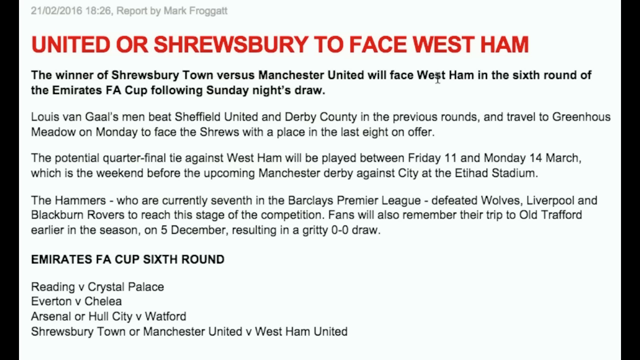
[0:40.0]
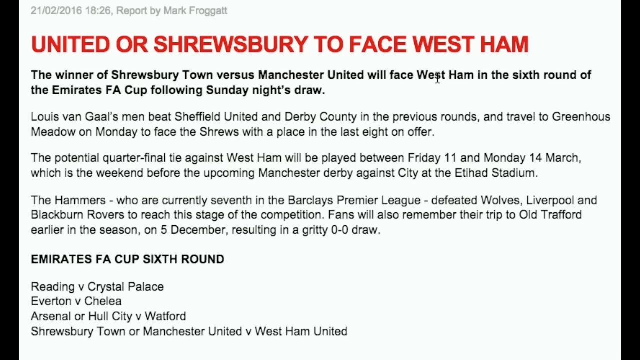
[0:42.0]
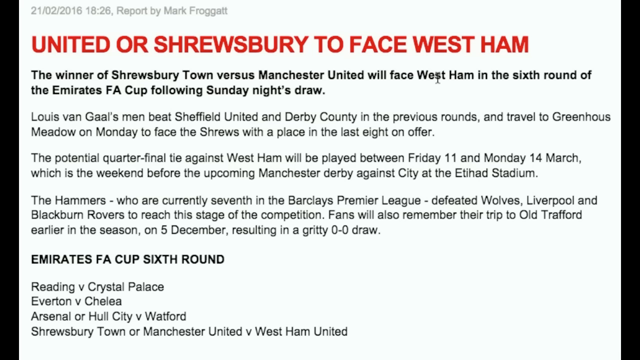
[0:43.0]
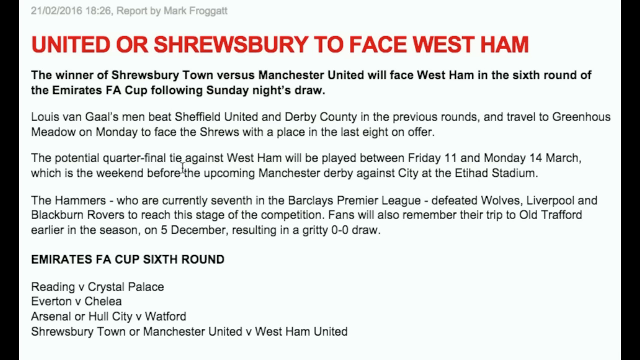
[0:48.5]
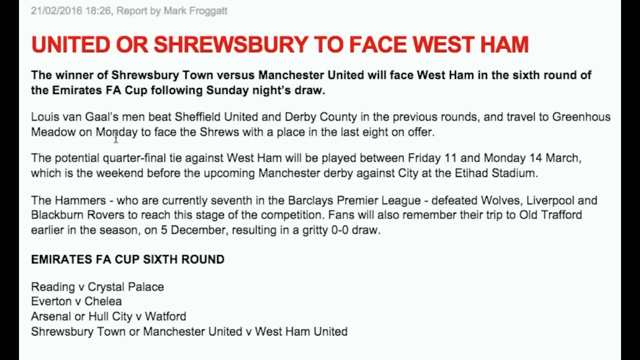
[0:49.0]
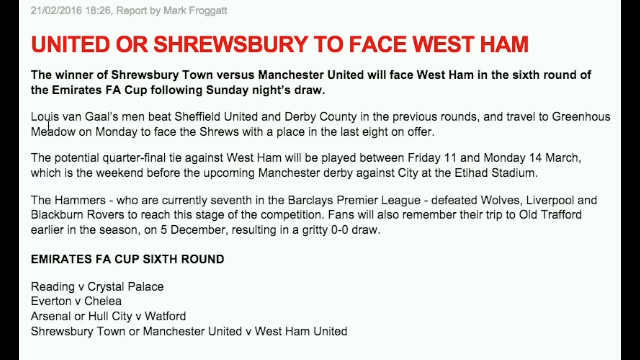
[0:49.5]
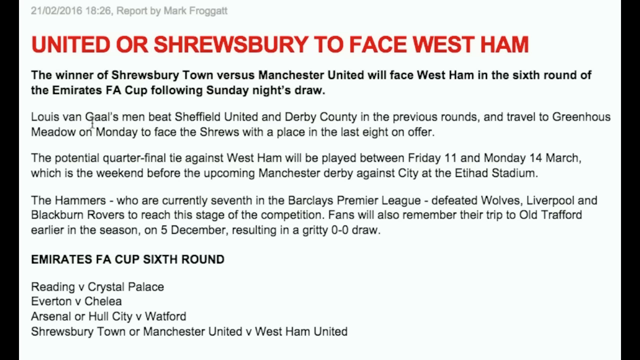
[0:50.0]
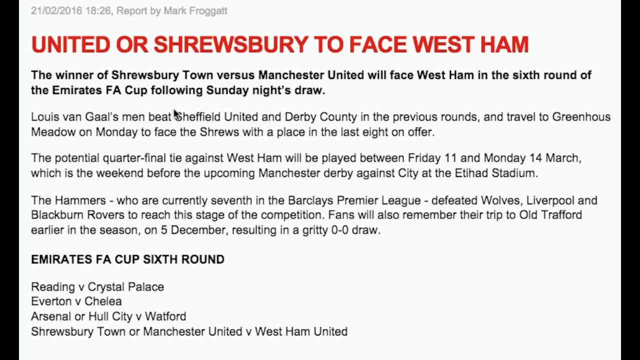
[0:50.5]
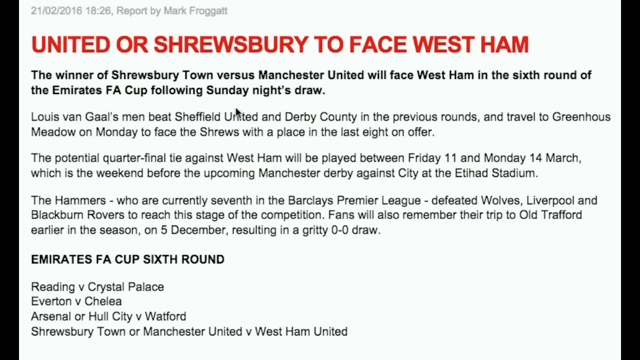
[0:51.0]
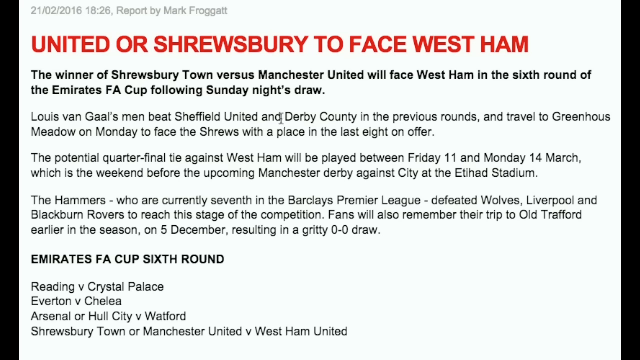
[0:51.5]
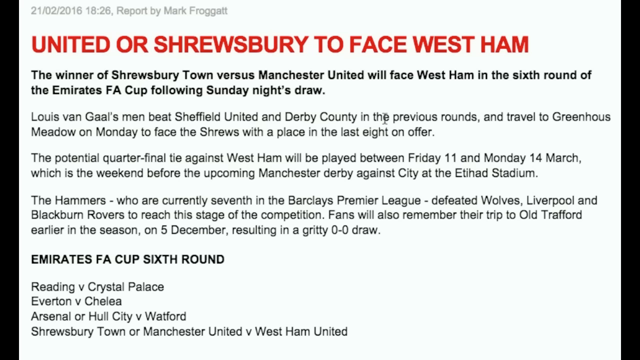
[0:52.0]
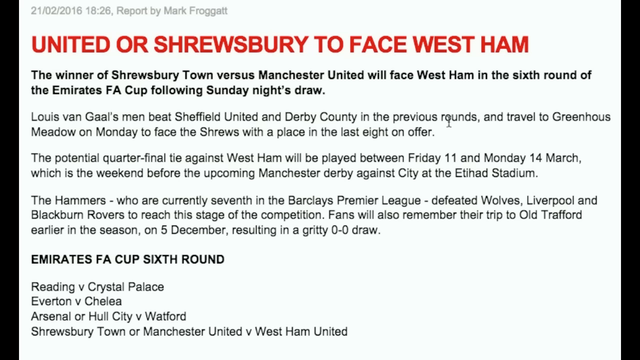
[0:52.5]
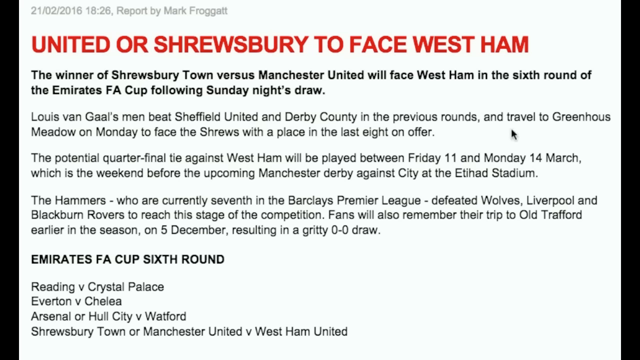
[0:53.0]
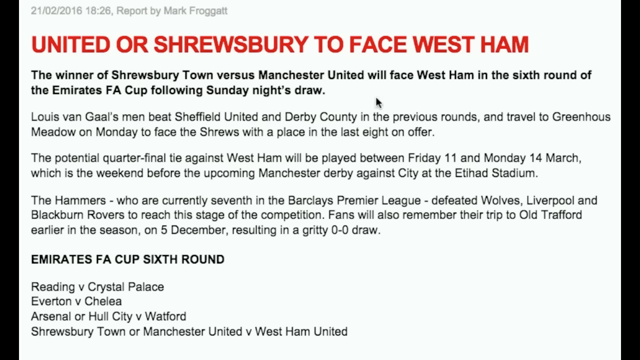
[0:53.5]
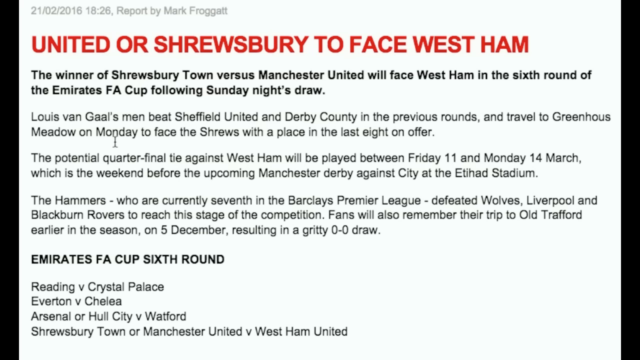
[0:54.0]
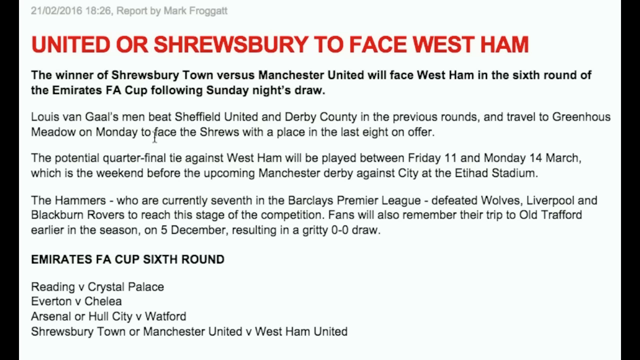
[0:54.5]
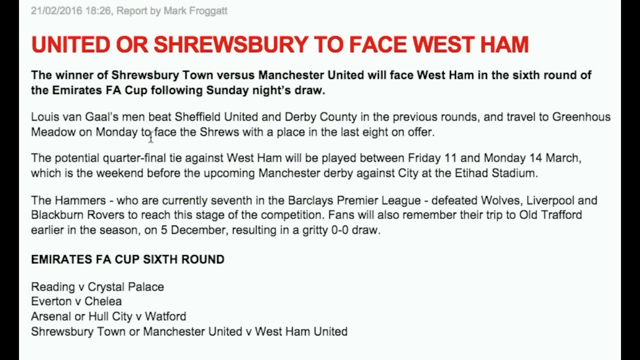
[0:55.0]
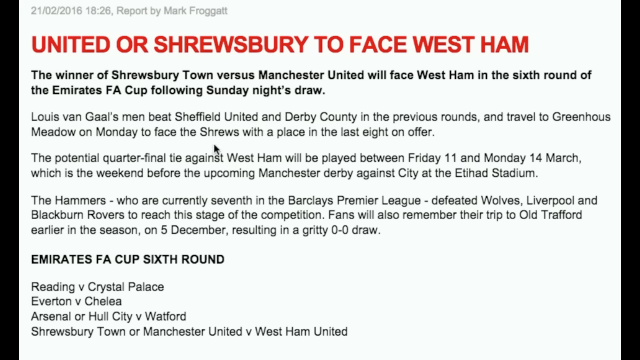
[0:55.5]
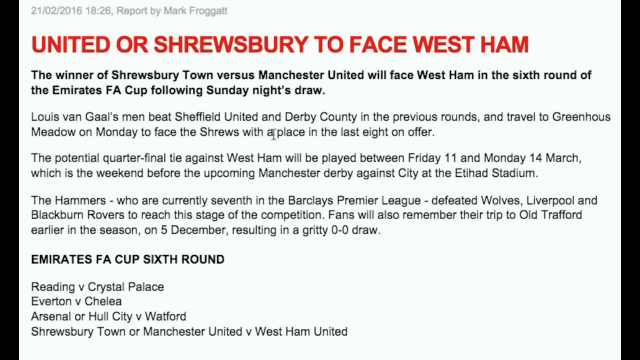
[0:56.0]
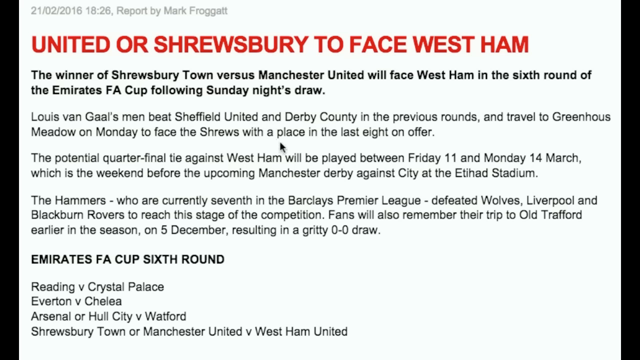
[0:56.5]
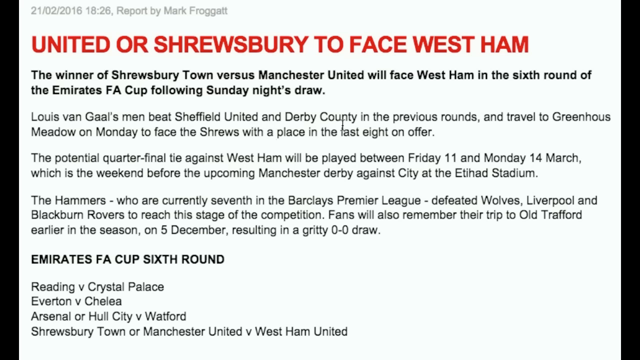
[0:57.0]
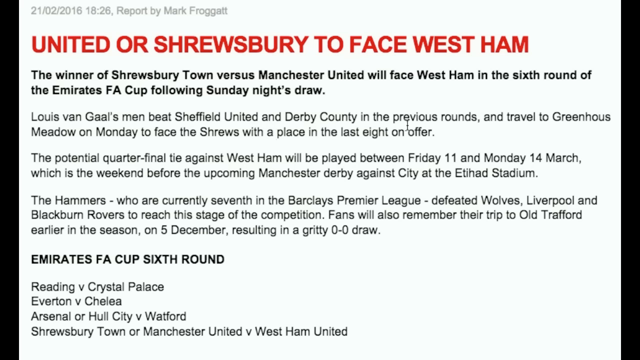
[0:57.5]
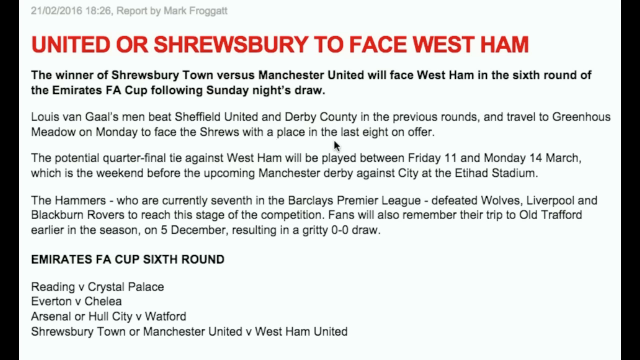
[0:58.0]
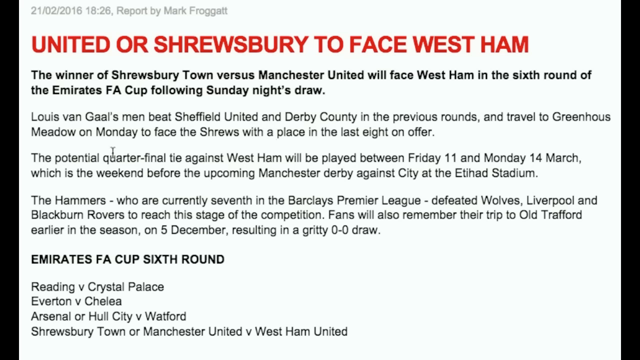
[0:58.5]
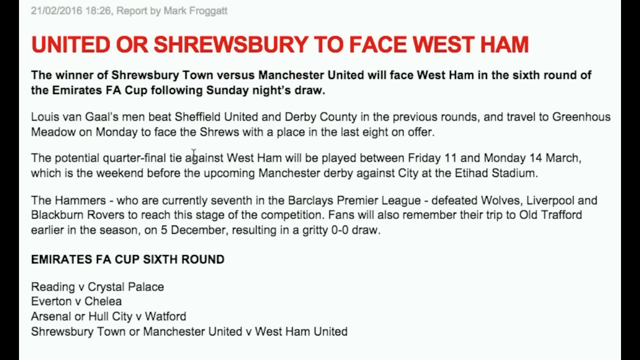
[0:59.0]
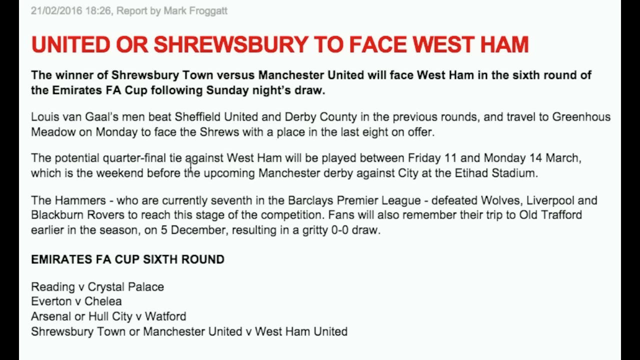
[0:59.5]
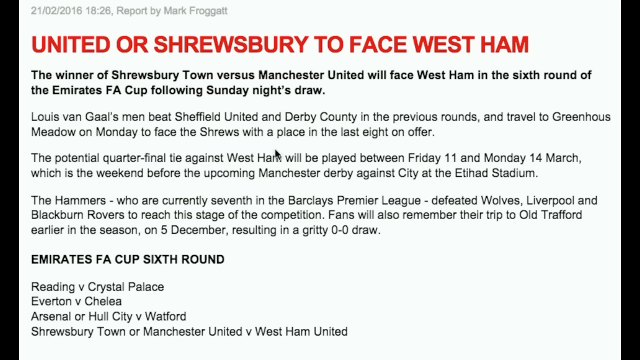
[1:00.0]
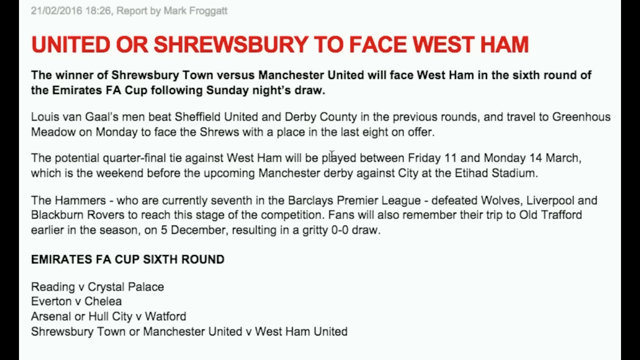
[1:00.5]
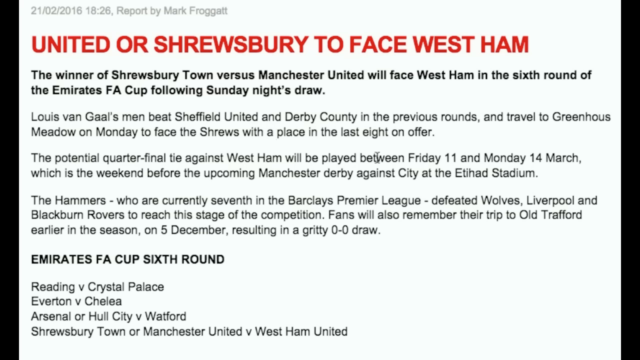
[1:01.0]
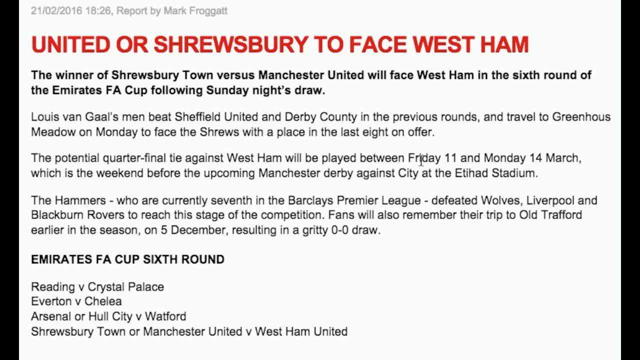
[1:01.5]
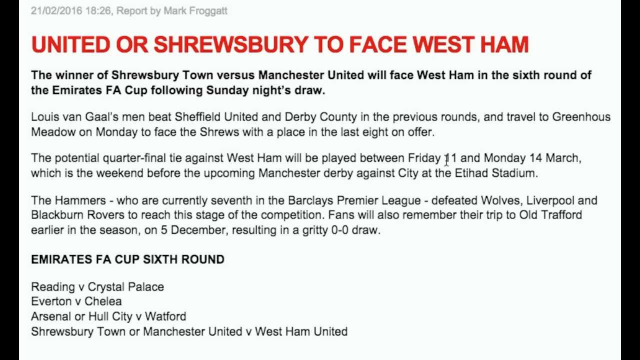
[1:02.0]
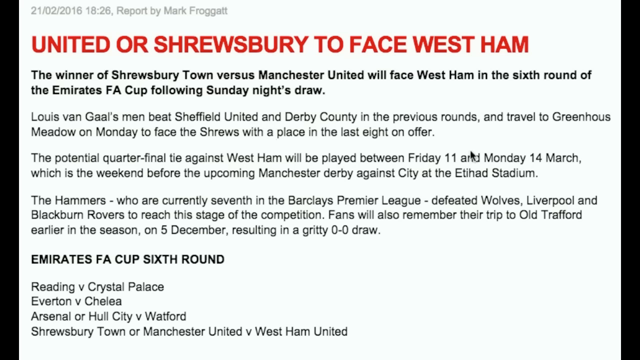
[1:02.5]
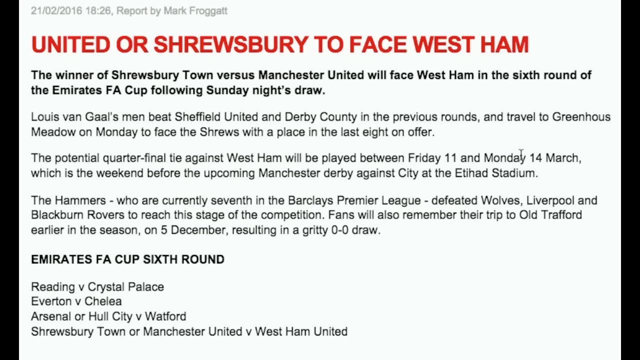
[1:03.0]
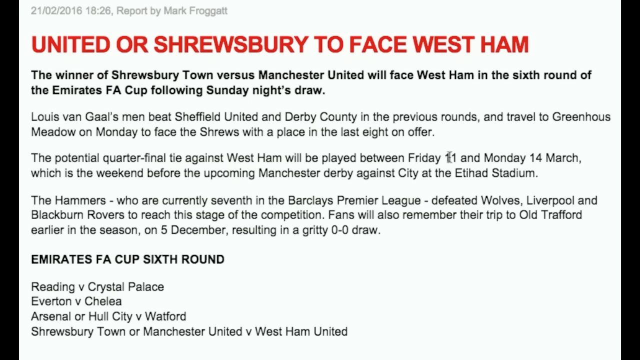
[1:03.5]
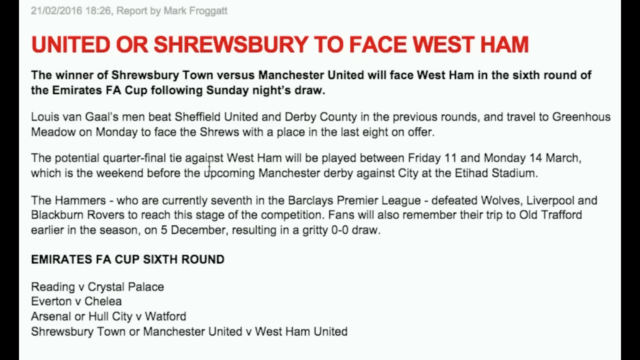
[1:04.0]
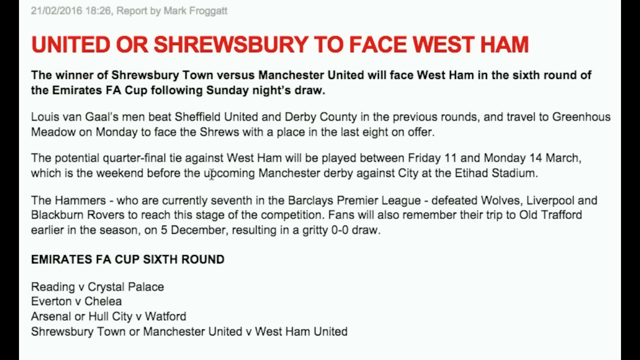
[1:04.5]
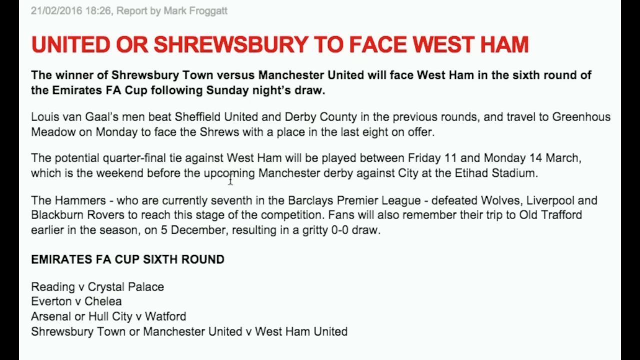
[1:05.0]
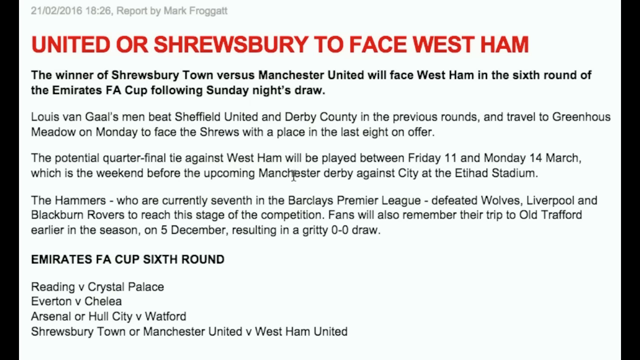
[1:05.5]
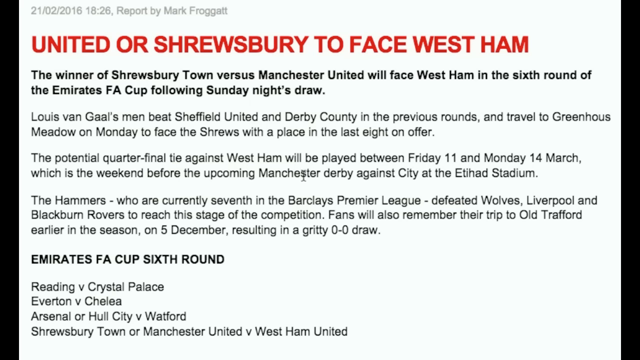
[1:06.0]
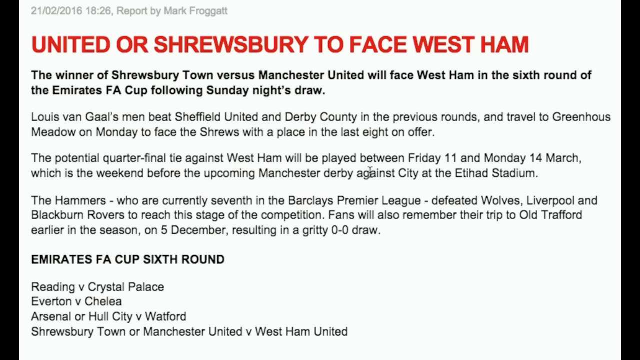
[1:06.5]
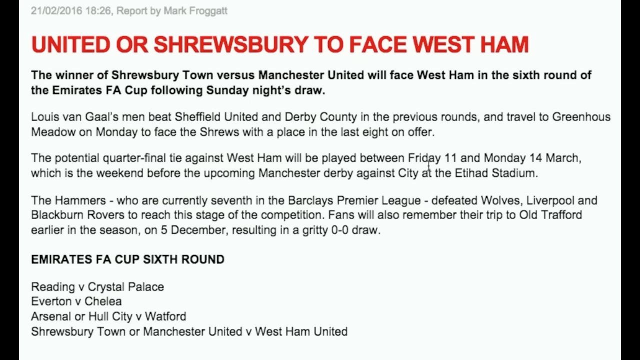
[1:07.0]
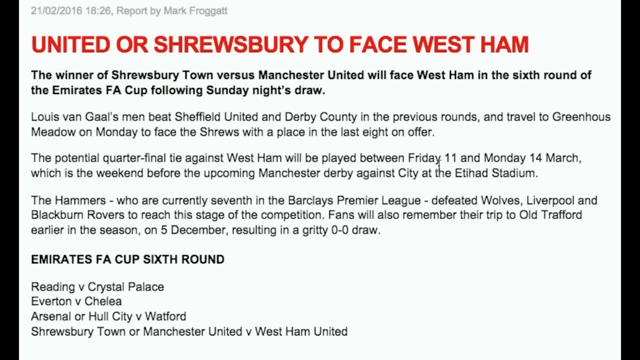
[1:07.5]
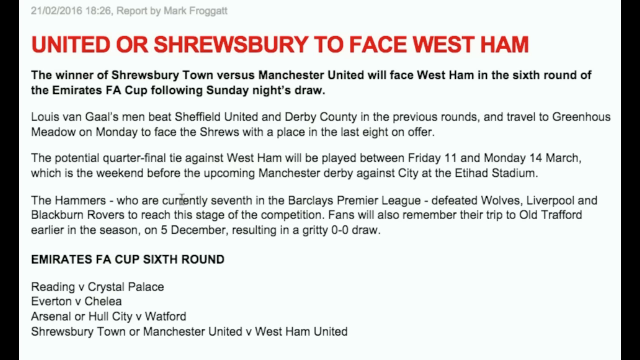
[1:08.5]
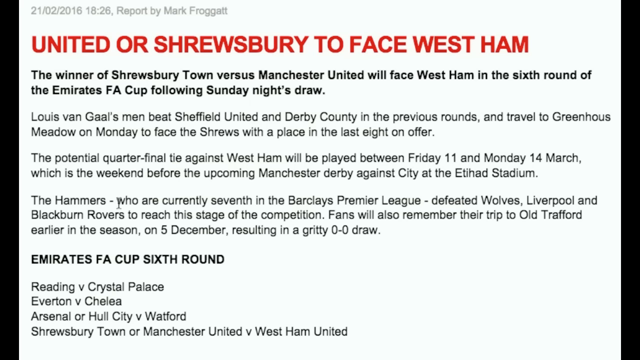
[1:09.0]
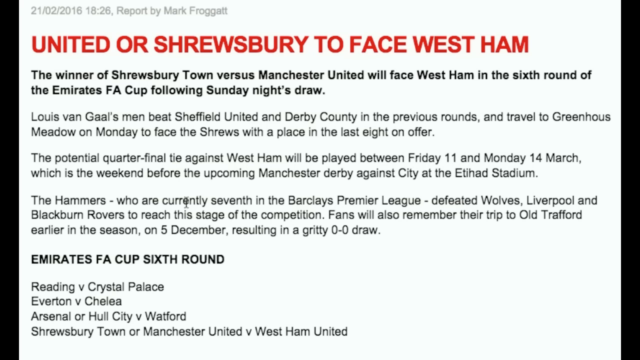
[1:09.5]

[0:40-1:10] The same text remains on screen: at the top, in large red capital letters, "United or Shrewsbury to face West Ham", and underneath in bold, "the winner of Shrewsbury Town versus Manchester United will face West Ham in the sixth round of the Emirates FA Cup following Sunday night's draw." Someone's mouse cursor moves along the text, pointing at the words, and it changes from a small line to an arrow off and on; it looks like the cursor is being moved along with the reading. Three very short paragraphs sit under the bold text. Then, in capital letters, it reads "Emirates FA Cup 6th round", followed by what looks like a short list of who is playing whom. The cursor keeps moving around.